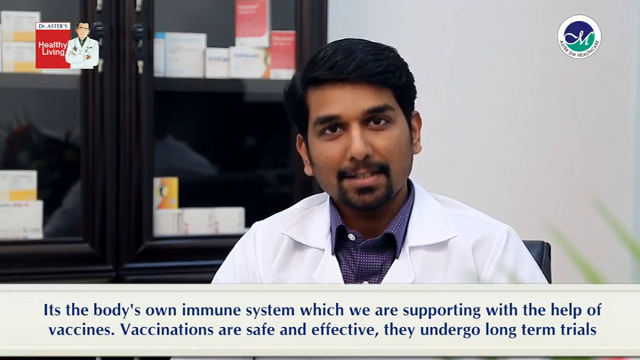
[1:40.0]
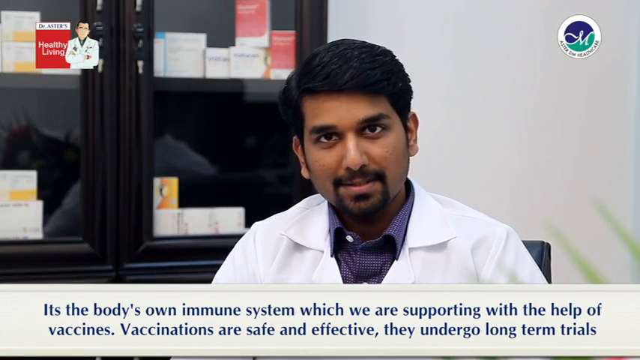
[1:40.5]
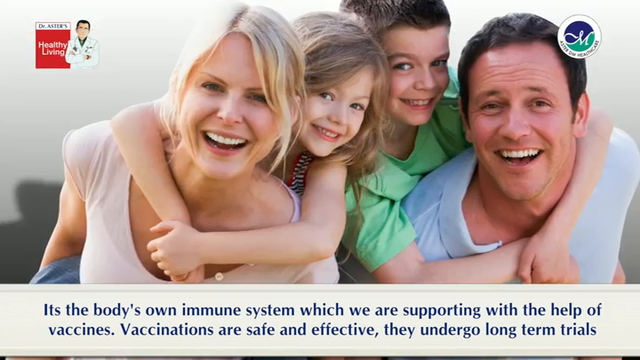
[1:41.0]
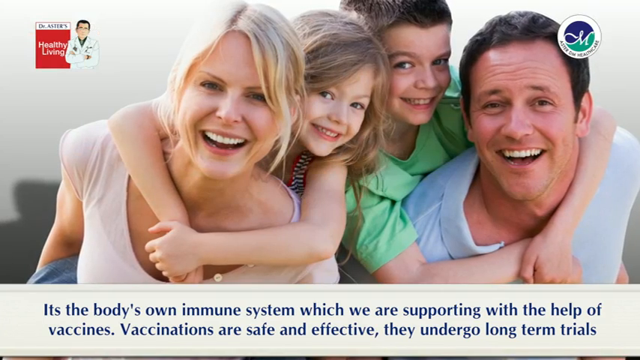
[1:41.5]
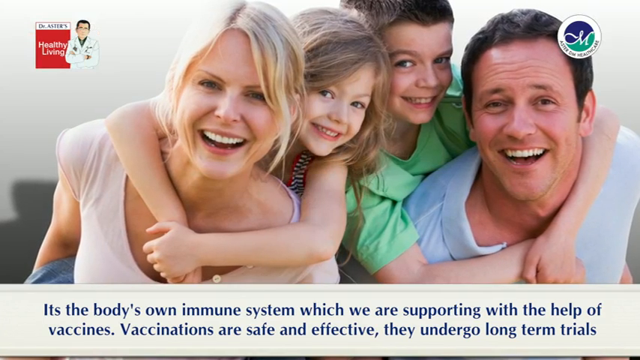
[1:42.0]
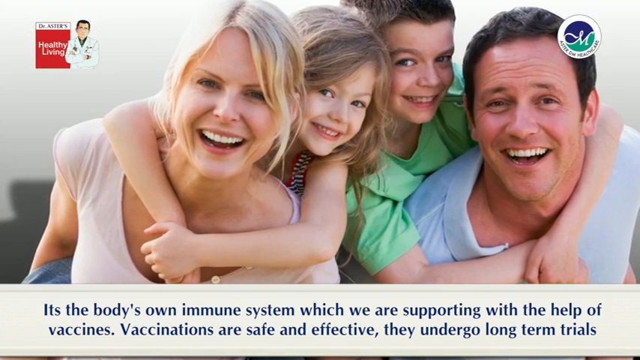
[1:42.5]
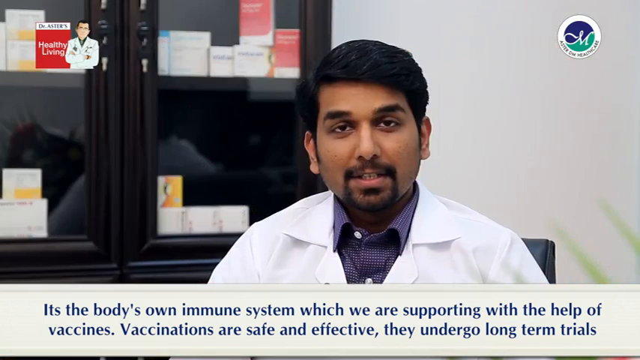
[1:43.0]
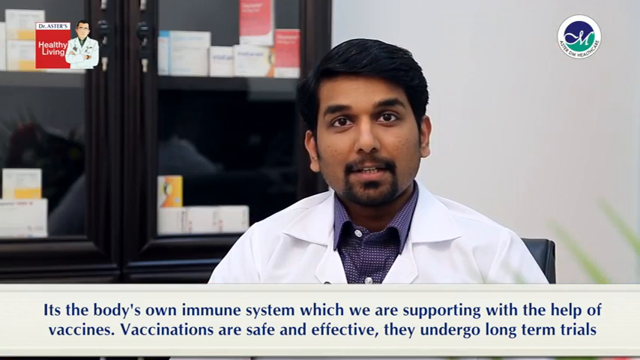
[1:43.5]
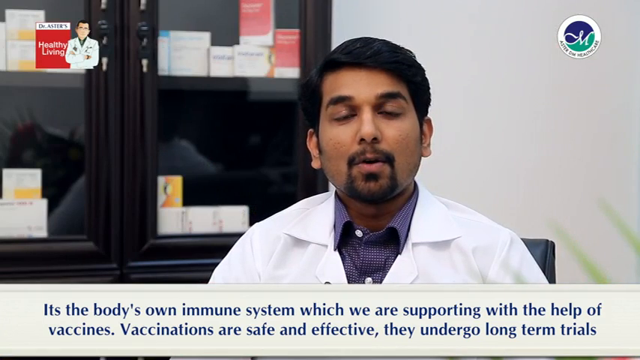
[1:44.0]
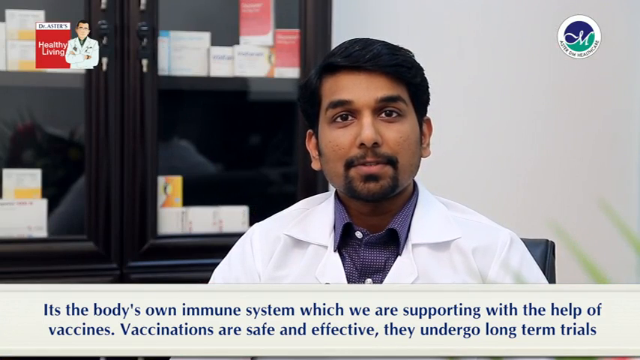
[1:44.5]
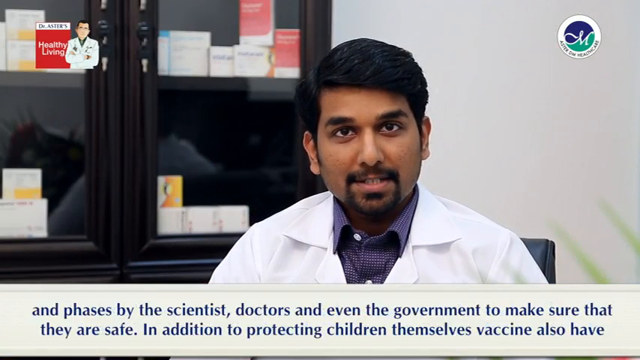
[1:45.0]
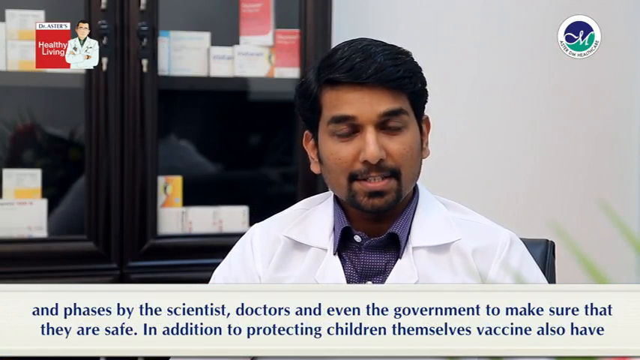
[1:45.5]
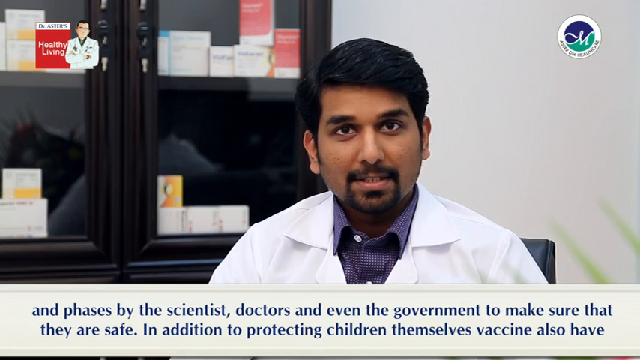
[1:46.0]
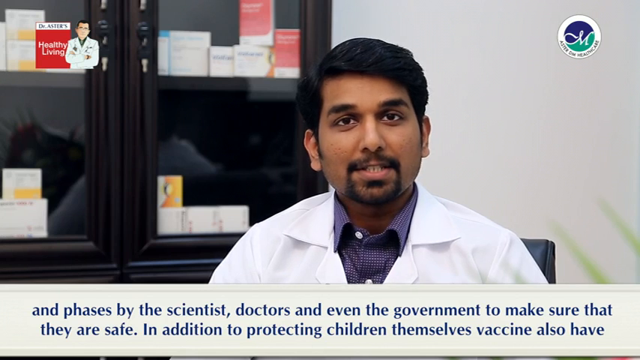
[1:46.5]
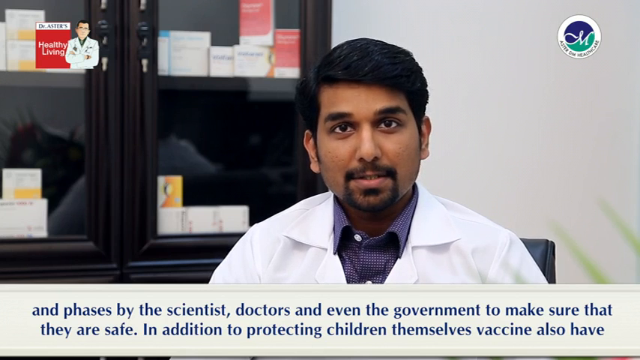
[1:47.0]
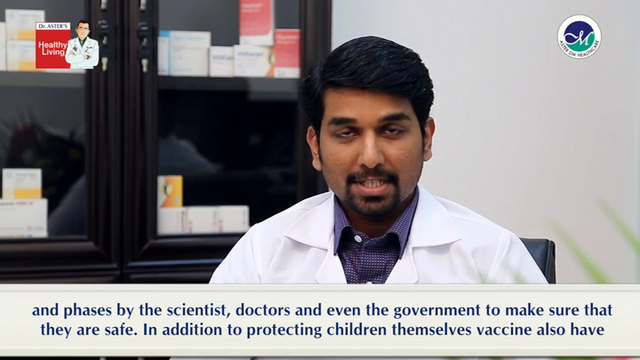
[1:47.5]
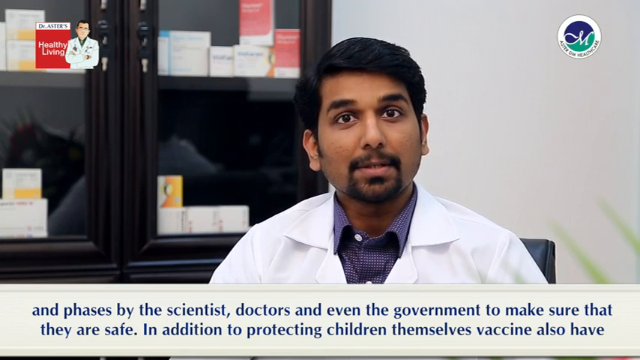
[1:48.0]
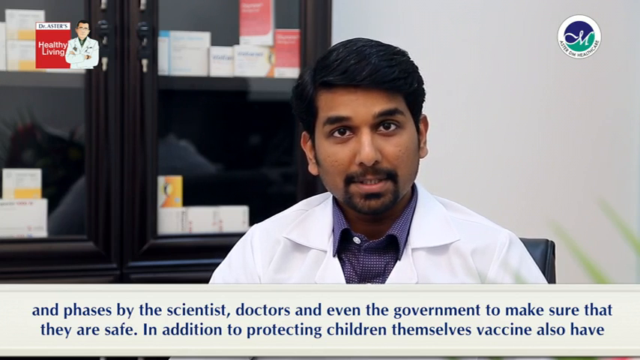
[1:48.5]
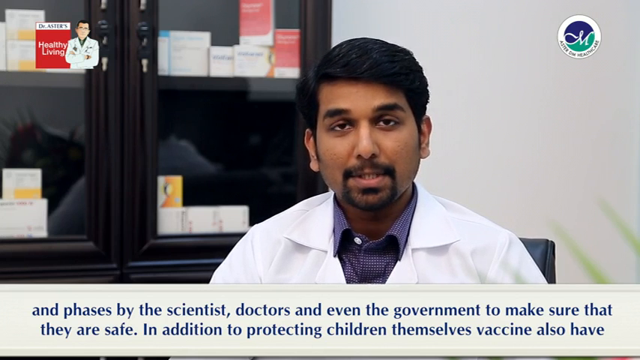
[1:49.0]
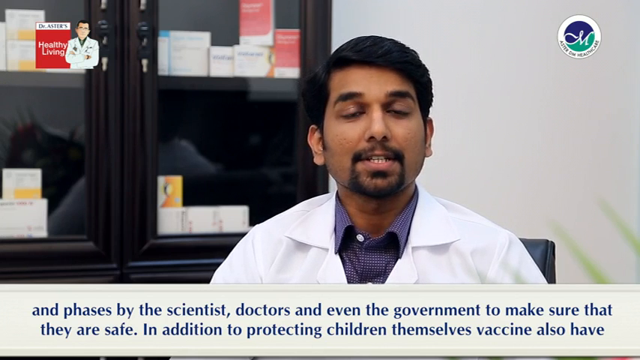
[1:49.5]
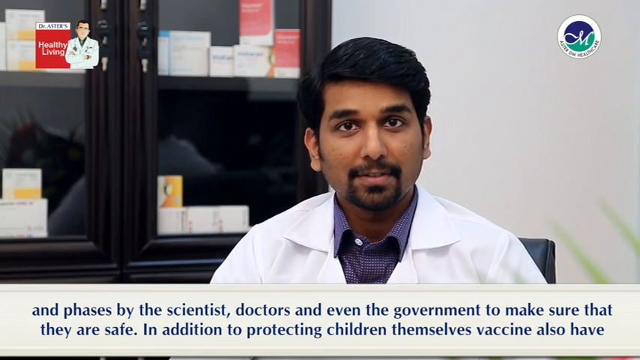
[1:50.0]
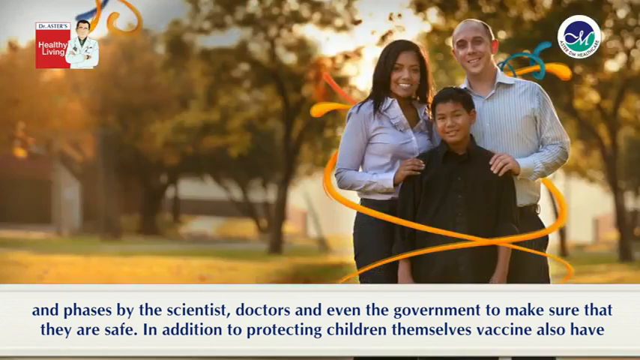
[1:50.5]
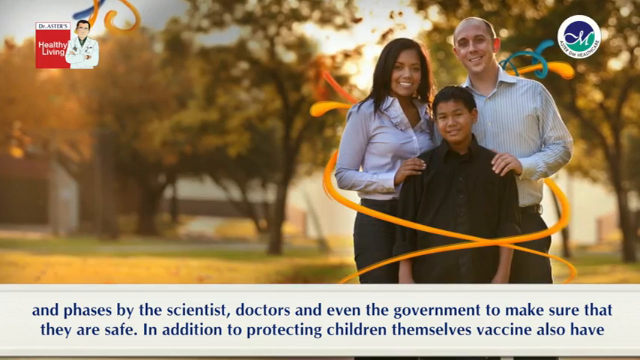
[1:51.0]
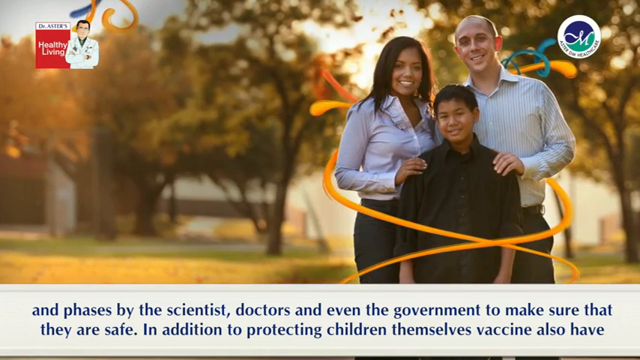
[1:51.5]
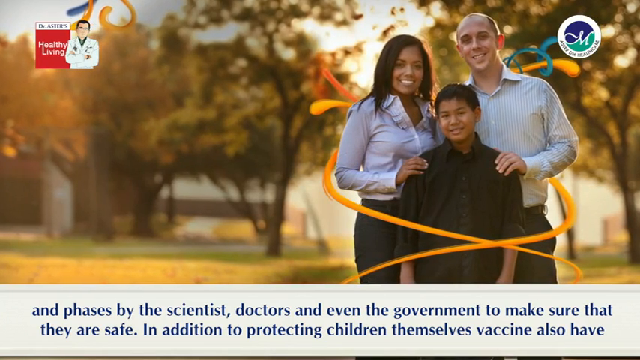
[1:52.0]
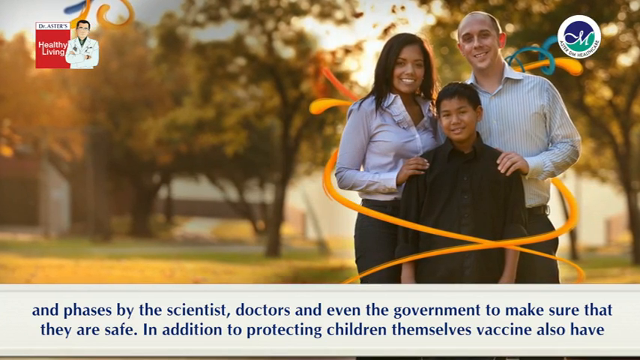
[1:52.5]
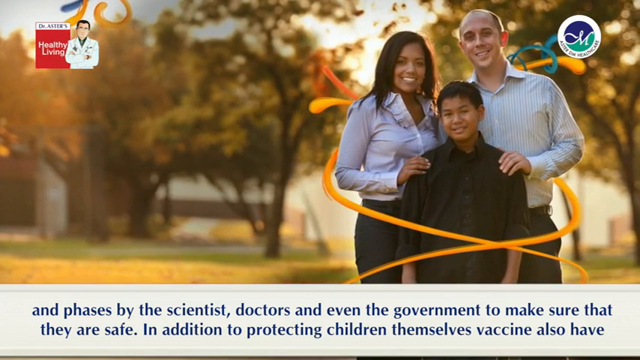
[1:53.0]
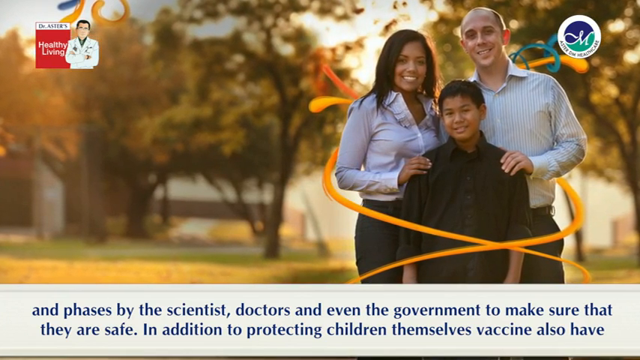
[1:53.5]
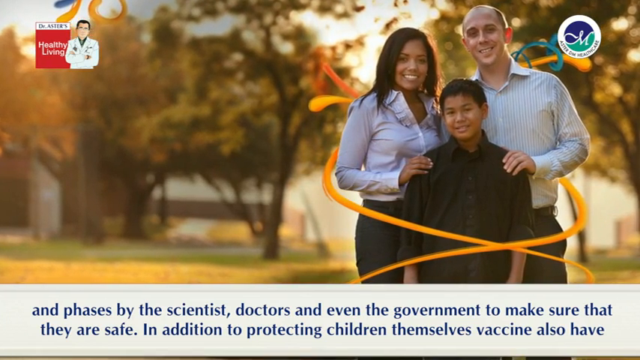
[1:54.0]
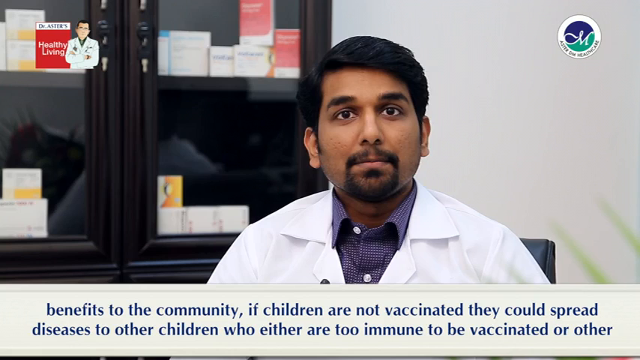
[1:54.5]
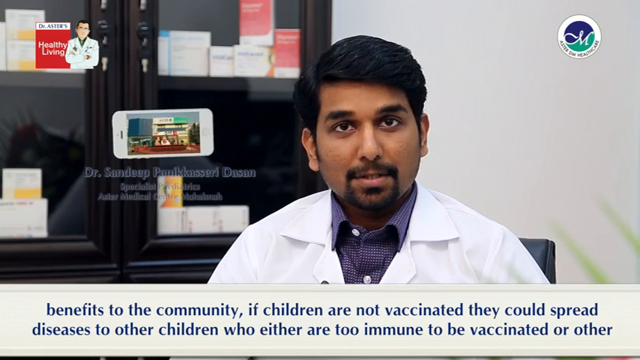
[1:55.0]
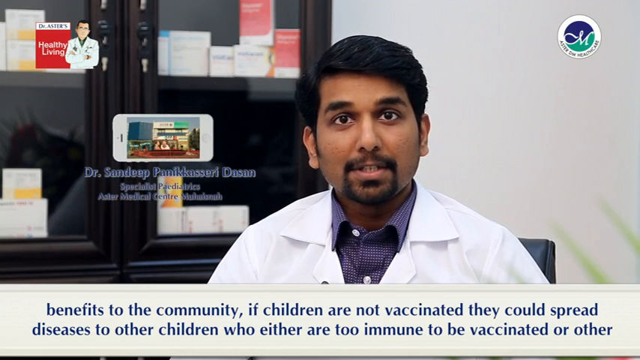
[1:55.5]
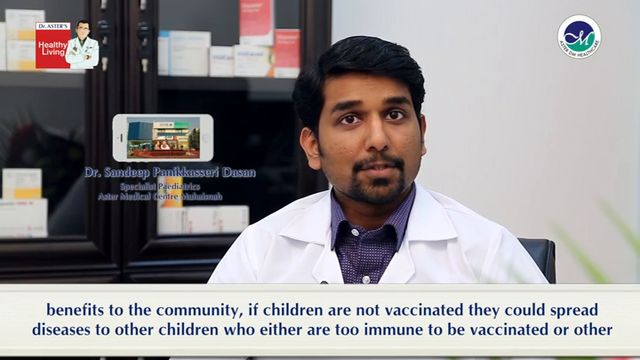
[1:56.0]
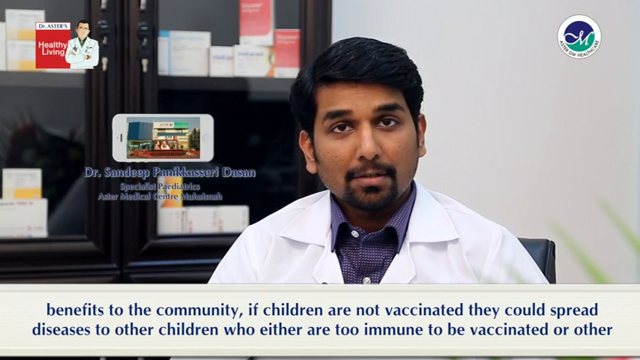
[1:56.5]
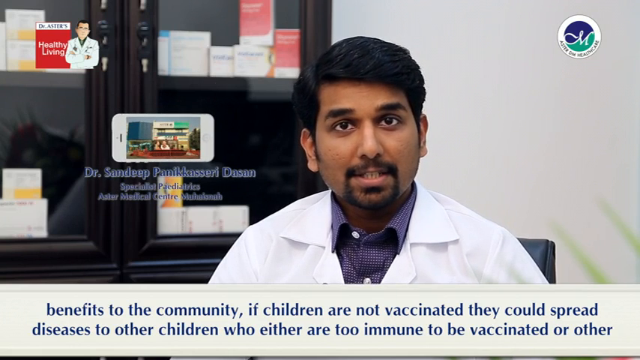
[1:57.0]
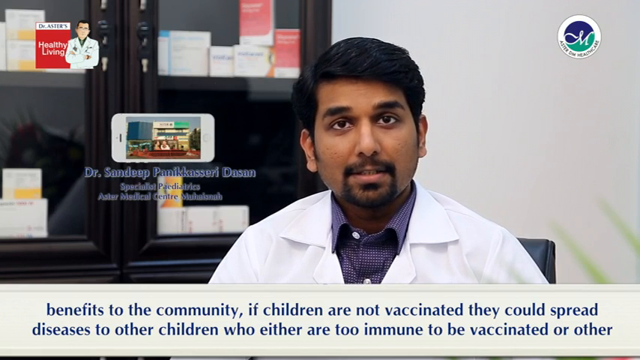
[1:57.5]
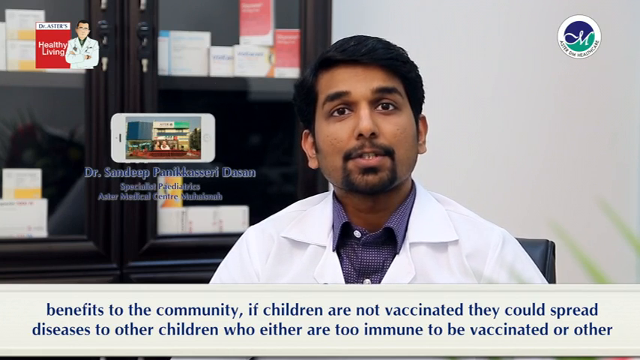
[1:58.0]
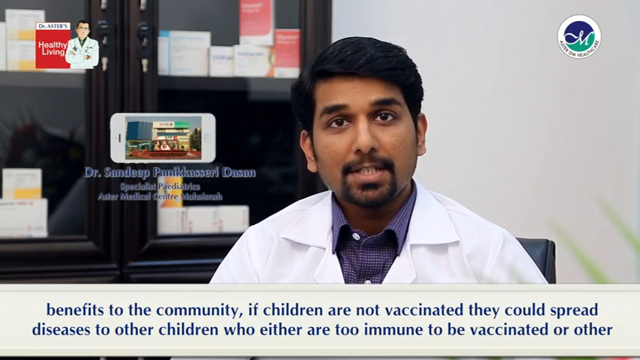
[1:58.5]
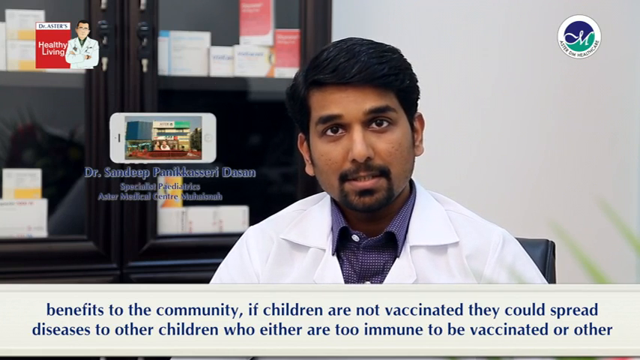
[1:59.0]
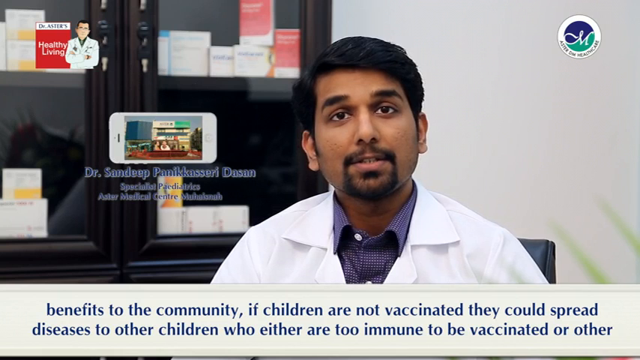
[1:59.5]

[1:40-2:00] An Indian man with black hair and a black goatee sits speaking to the camera, wearing a collared purple shirt with the top button unbuttoned and a white doctor's coat over it. Behind him is a black bookcase with shelves holding boxes of stuff in different sizes and colors, and over his left shoulder a white wall is visible. Blue text appears at the bottom of the screen: "it's the body's own immune system, which we are supporting with the help of vaccines. Vaccinations are safe and effective, they undergo long-term trials." That text goes away and new text reads "and phases by the scientists, doctors and even the government to make sure that they are safe. In addition to protecting children themselves, vaccines also have benefits to the community. If children are not vaccinated they could spread diseases to other children."